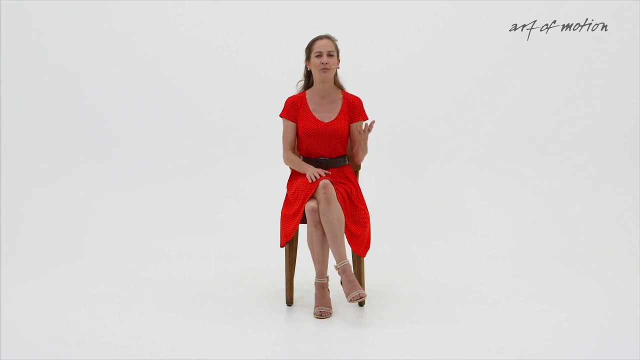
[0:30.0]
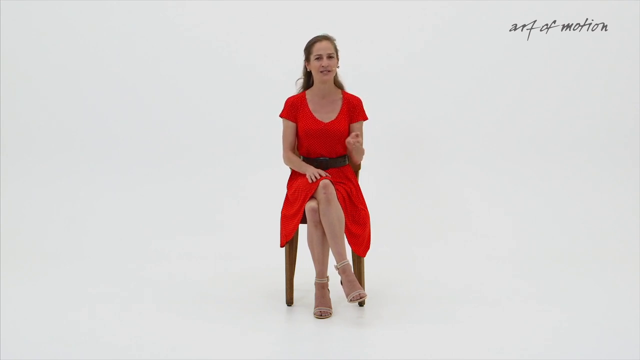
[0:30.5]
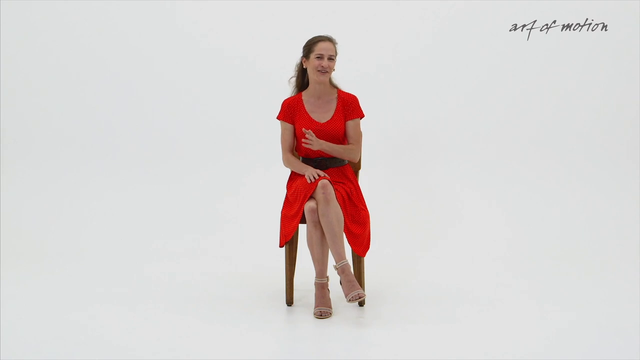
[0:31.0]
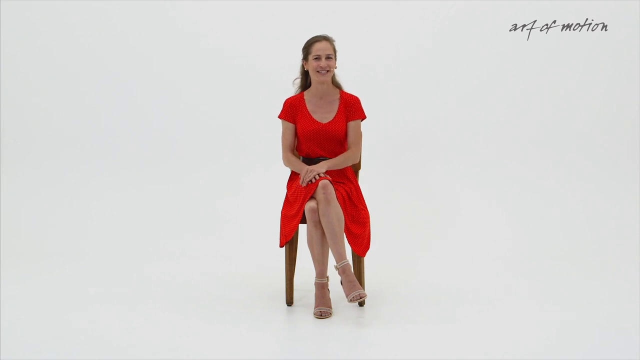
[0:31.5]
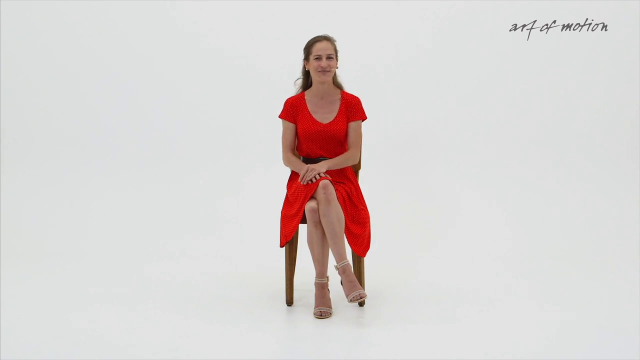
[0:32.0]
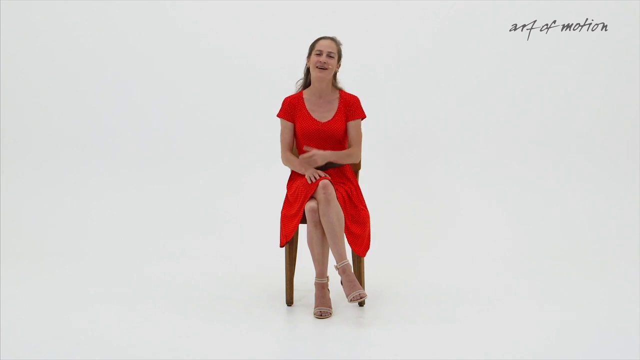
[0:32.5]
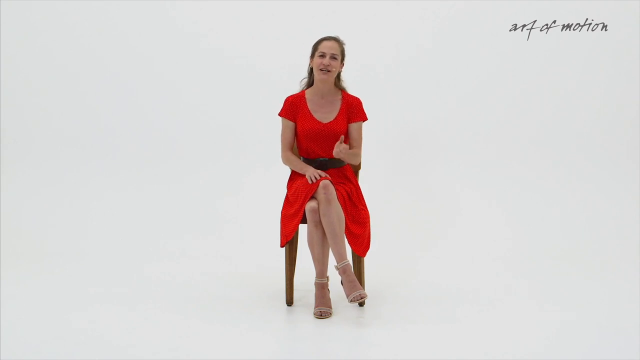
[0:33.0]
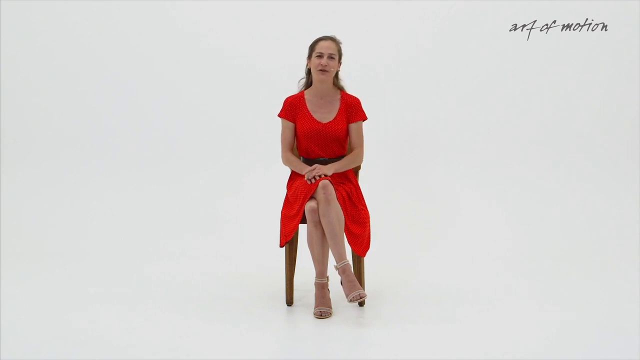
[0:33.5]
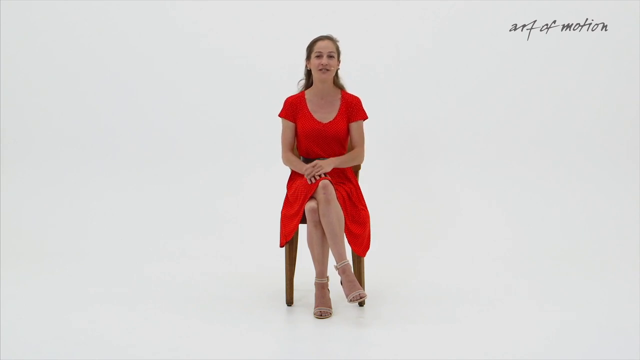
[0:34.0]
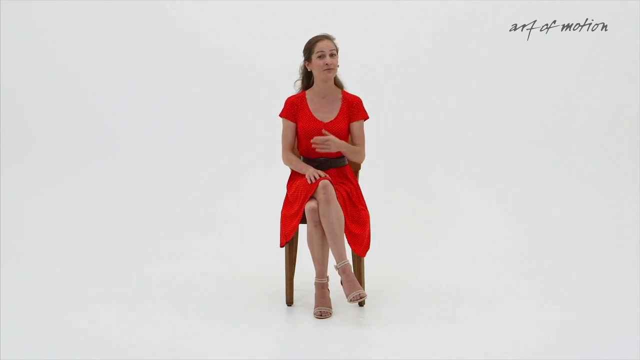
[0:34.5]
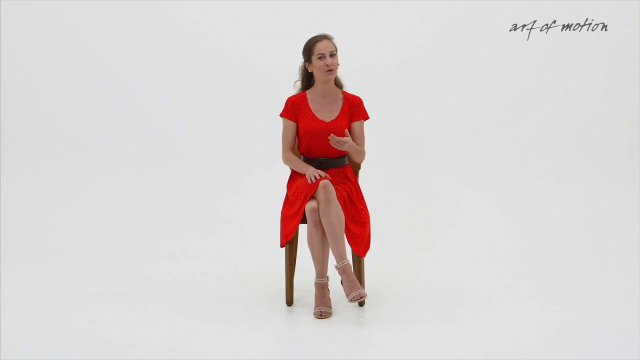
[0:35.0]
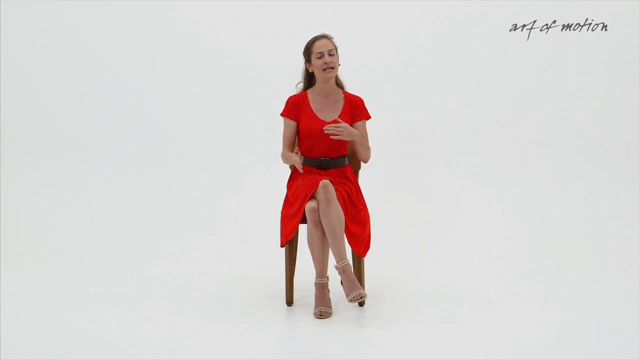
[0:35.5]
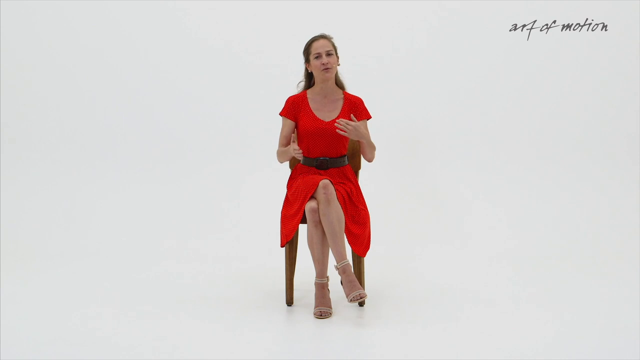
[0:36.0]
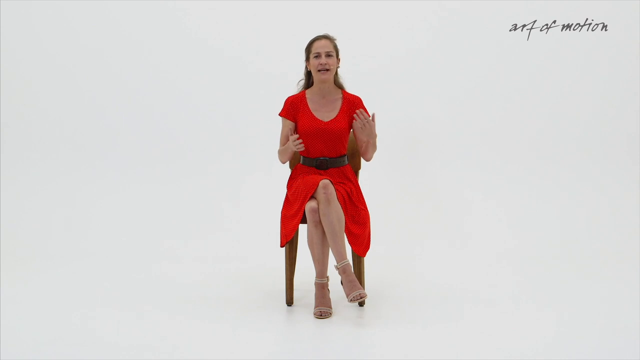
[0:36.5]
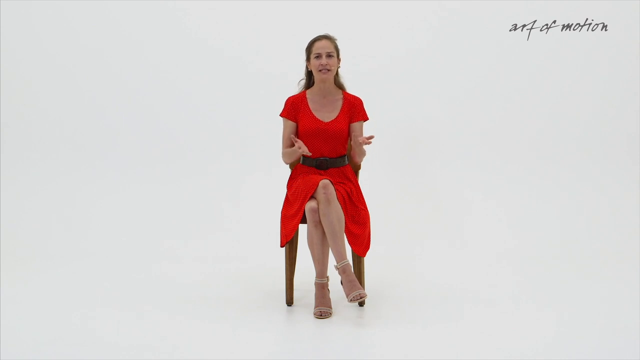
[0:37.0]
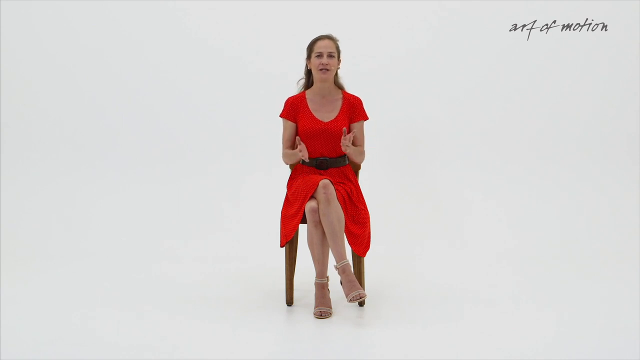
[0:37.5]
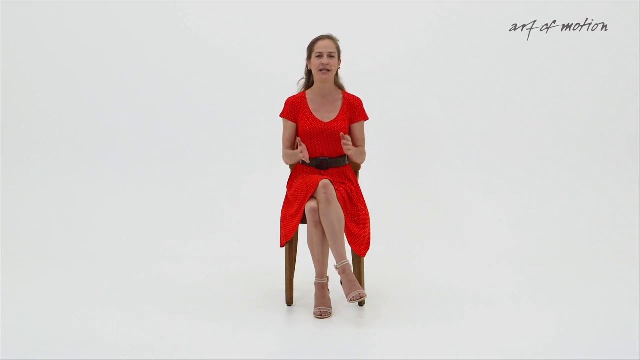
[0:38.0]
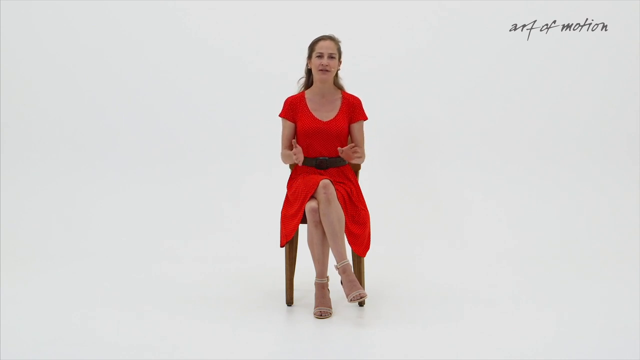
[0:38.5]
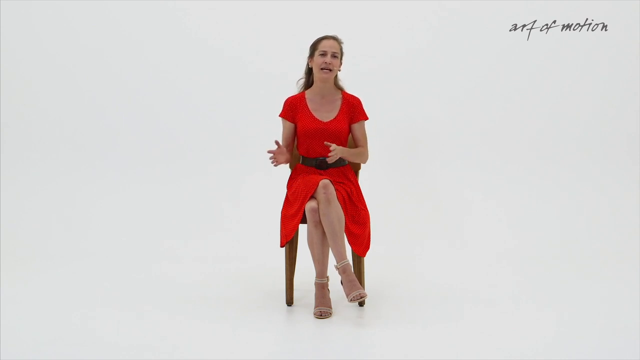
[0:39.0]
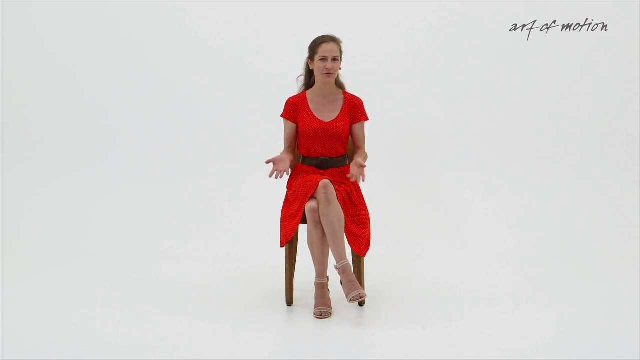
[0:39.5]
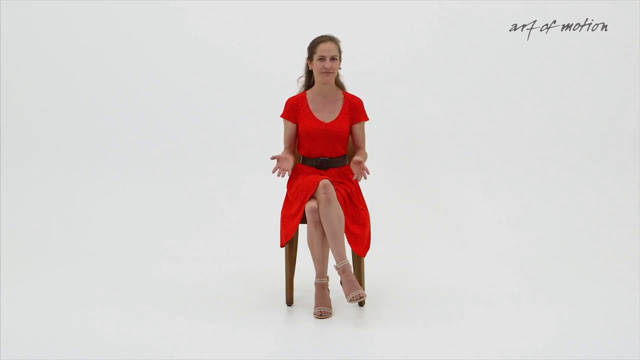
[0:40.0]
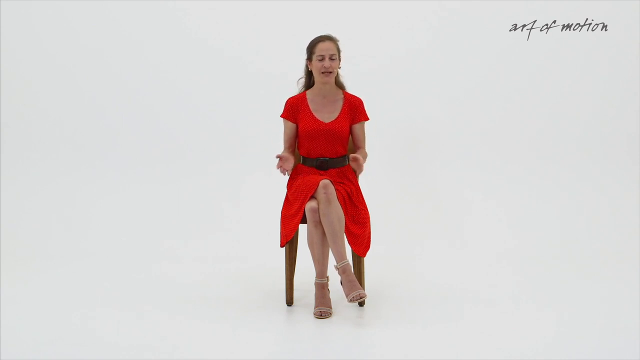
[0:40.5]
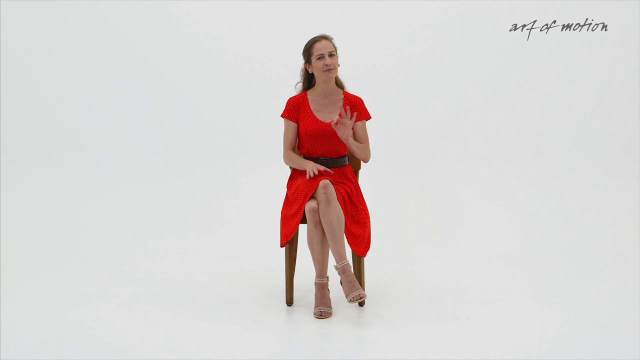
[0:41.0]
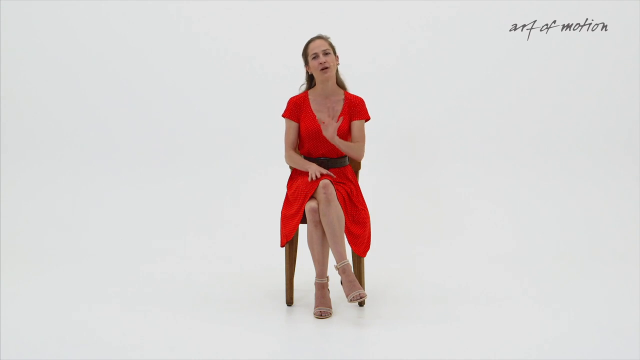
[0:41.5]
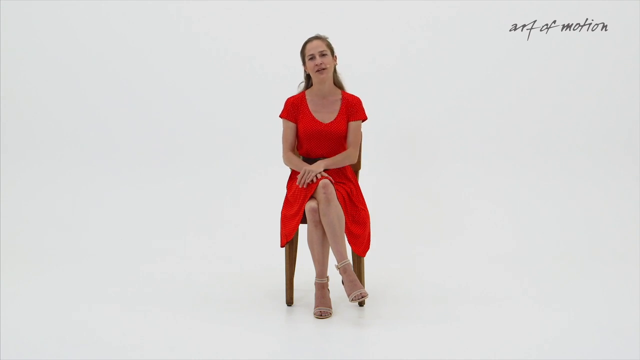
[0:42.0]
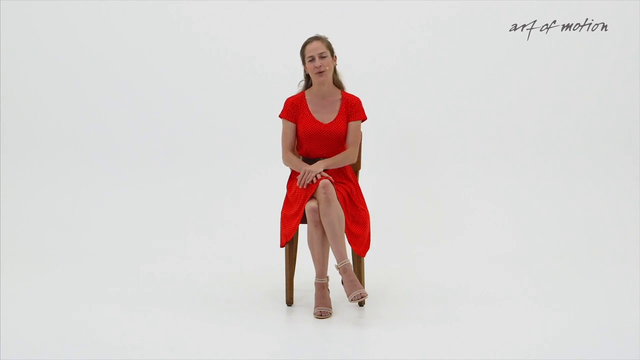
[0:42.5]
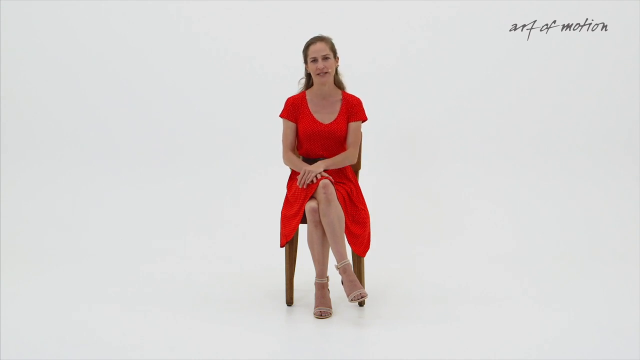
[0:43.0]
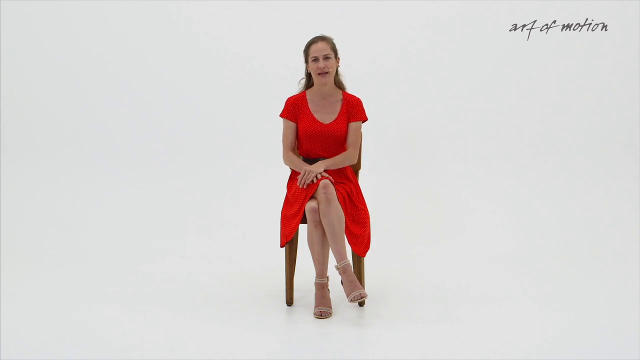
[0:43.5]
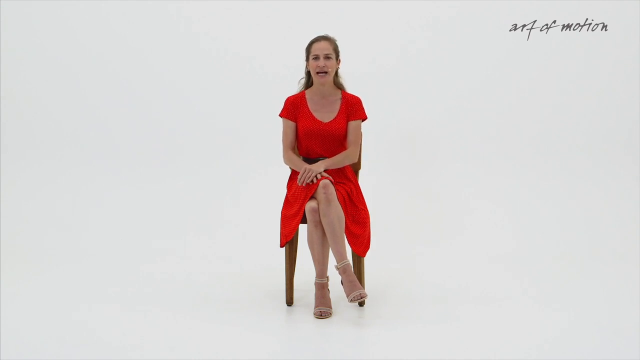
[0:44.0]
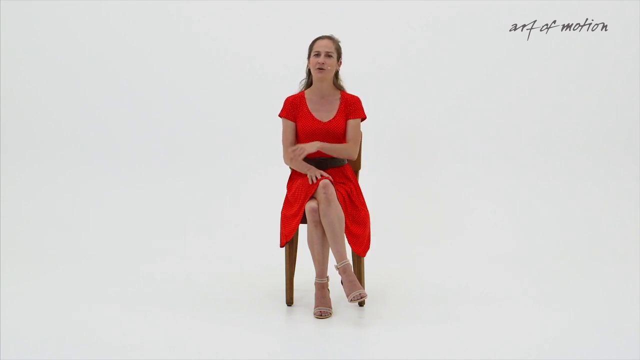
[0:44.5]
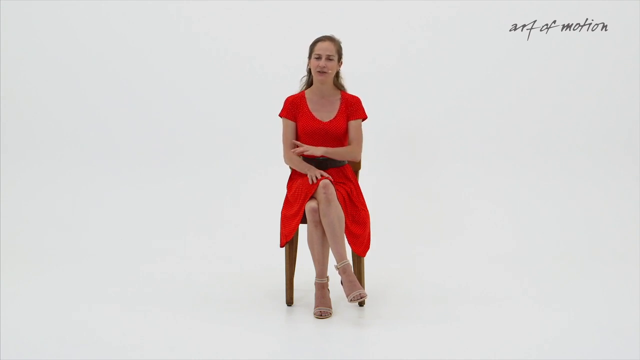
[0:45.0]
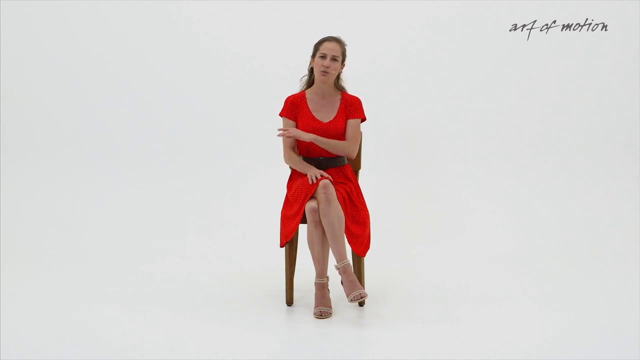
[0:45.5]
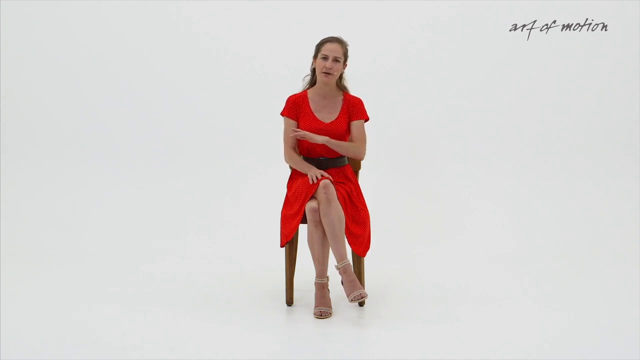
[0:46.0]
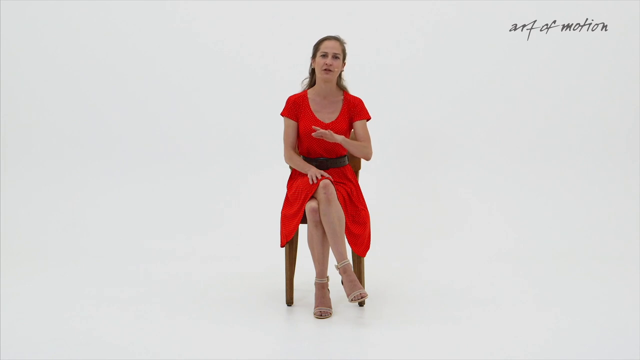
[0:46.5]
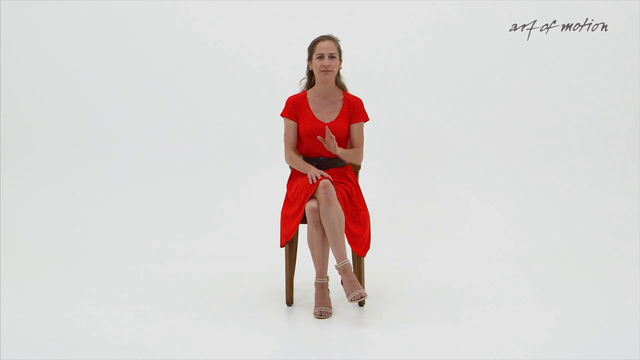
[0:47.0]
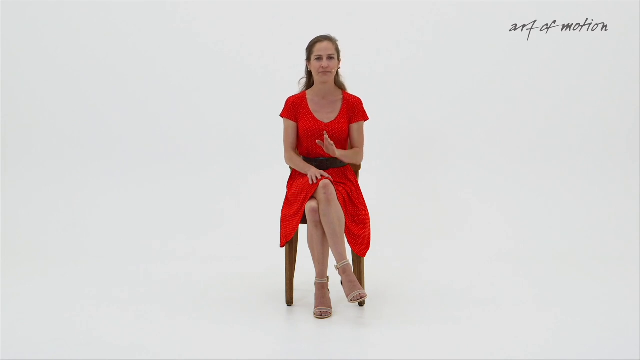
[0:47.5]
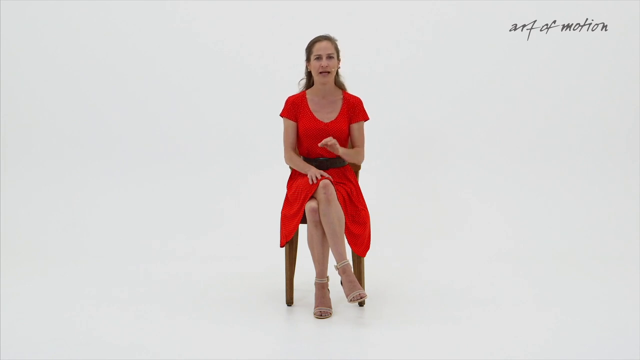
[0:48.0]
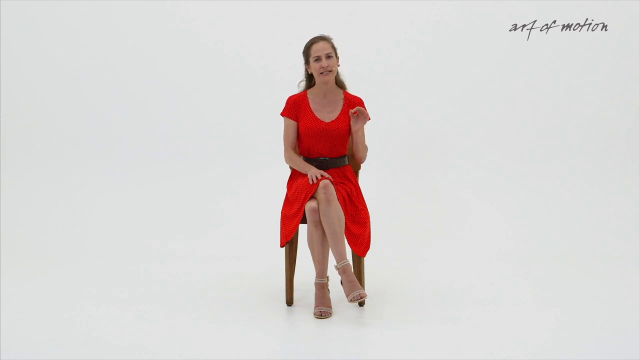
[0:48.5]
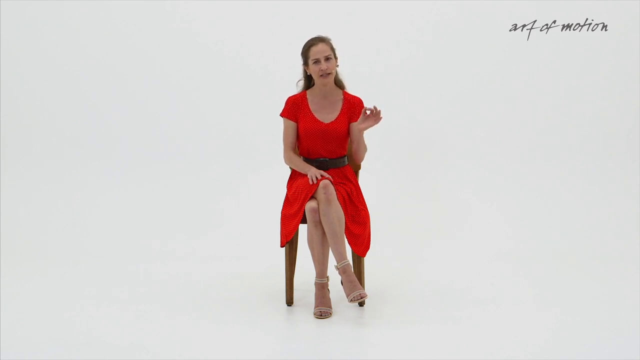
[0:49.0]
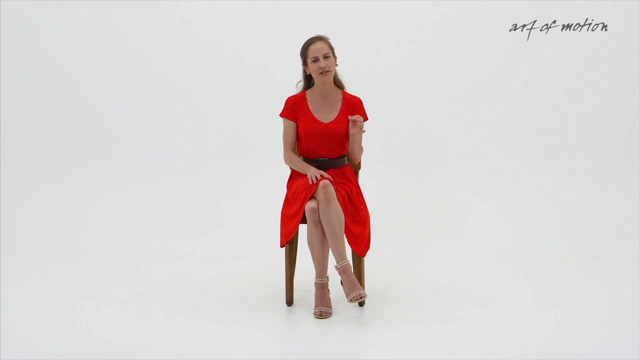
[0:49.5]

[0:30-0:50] The woman in the red dress holds her left hand palm up at about chest level while her right hand remains on the lap of her crossed legs. She keeps speaking and gesturing with her left hand, bringing it across her body and down on top of the resting hand, then lifts both hands for a moment with palms up before bringing them back down to her side. She returns her right hand to her lap and makes further gestures with her left hand at chest level, palm facing the camera, before resting it briefly over her right hand again. She then lifts her left hand to gesture a little to the side of her torso at about shoulder height, with her thumb and pointing finger together as if holding a delicate feather between them. The shot ends with her left hand palm up at shoulder level as she talks.